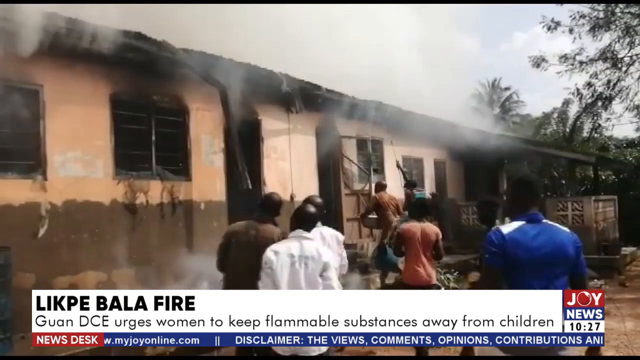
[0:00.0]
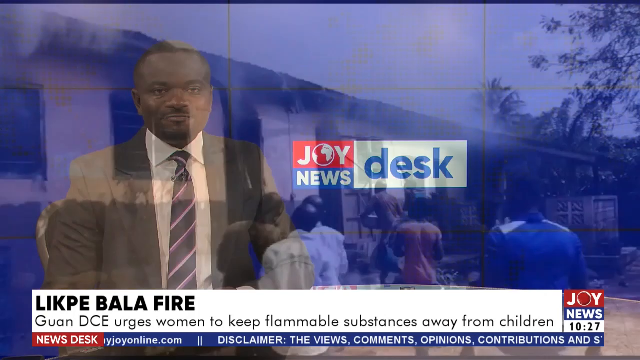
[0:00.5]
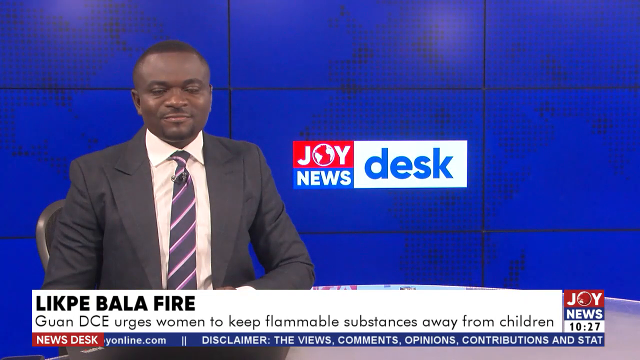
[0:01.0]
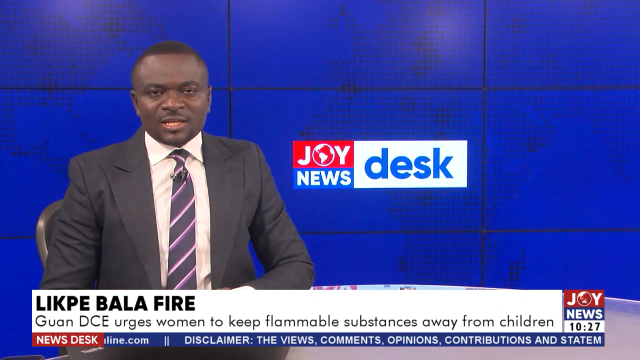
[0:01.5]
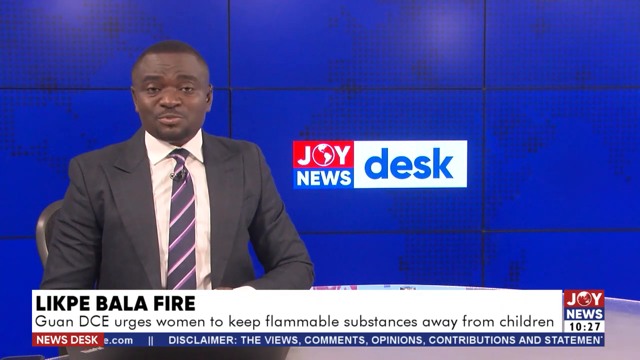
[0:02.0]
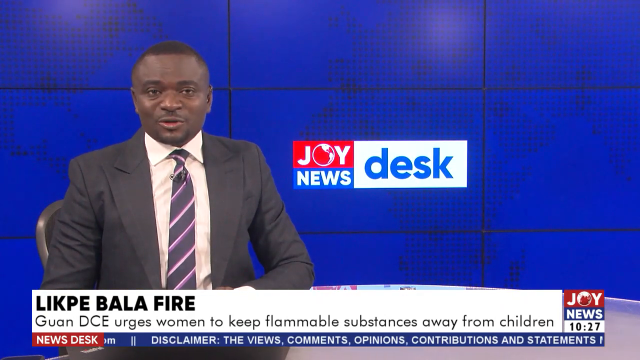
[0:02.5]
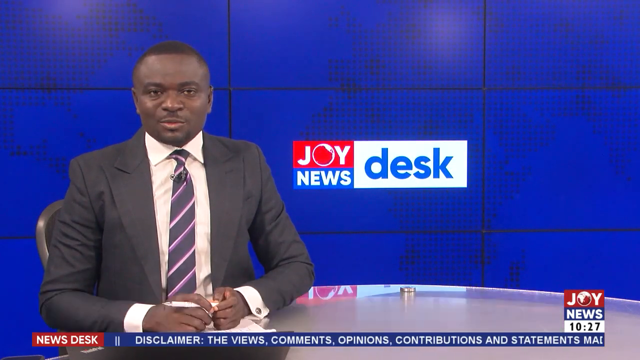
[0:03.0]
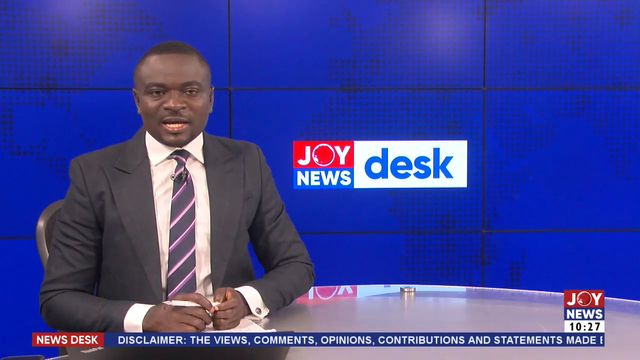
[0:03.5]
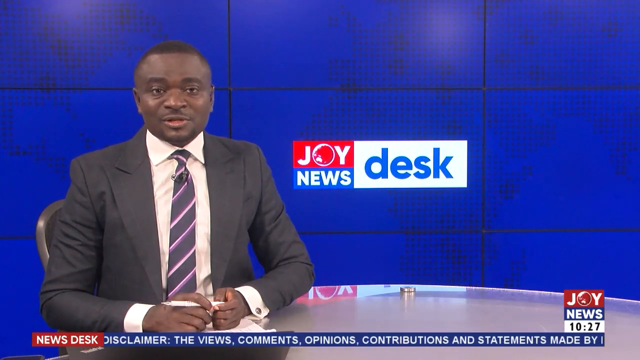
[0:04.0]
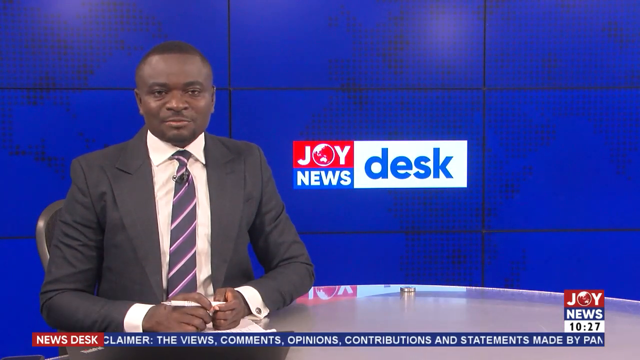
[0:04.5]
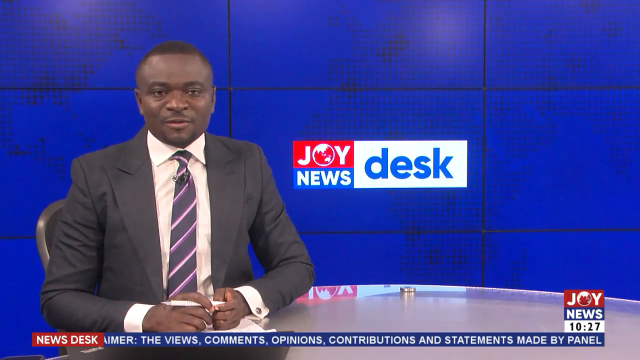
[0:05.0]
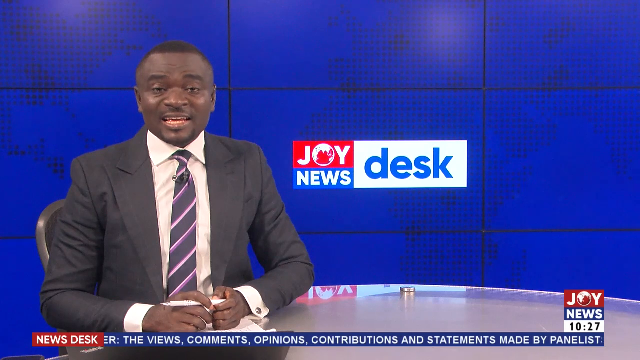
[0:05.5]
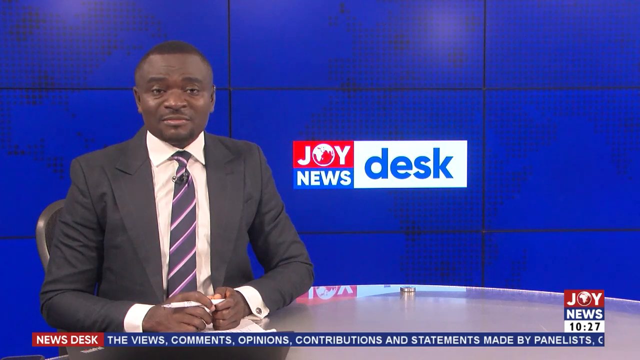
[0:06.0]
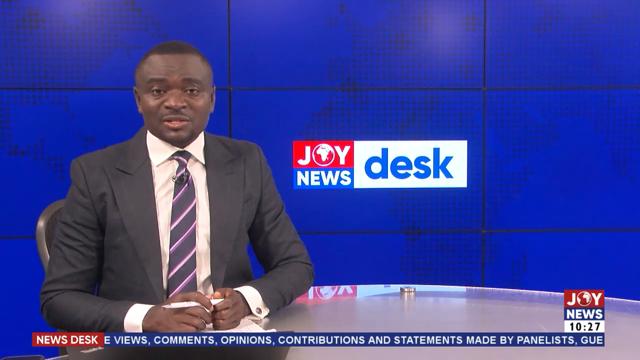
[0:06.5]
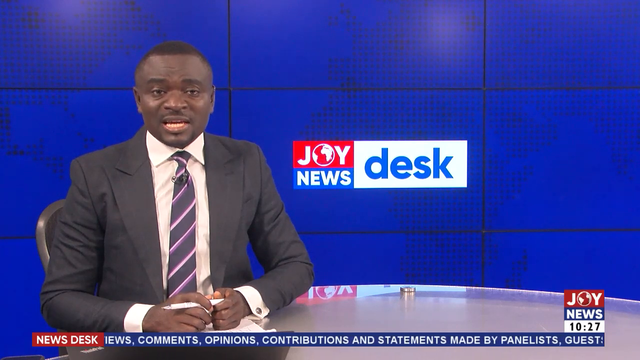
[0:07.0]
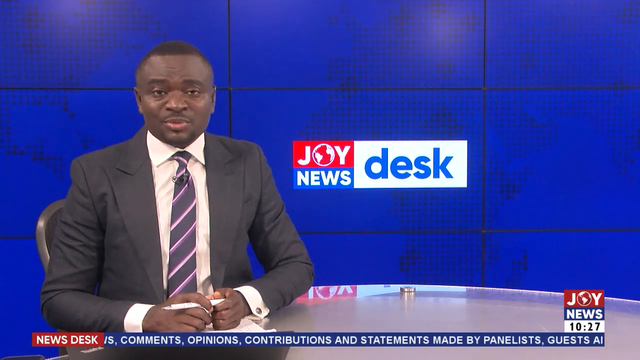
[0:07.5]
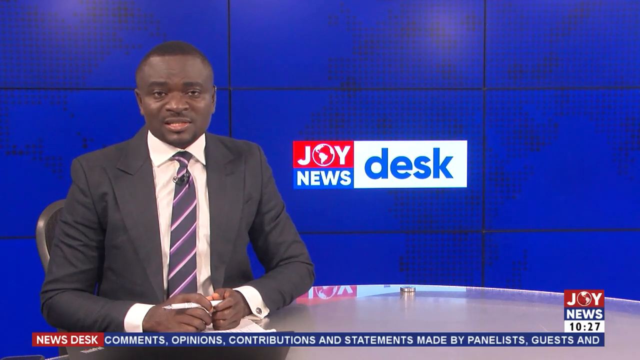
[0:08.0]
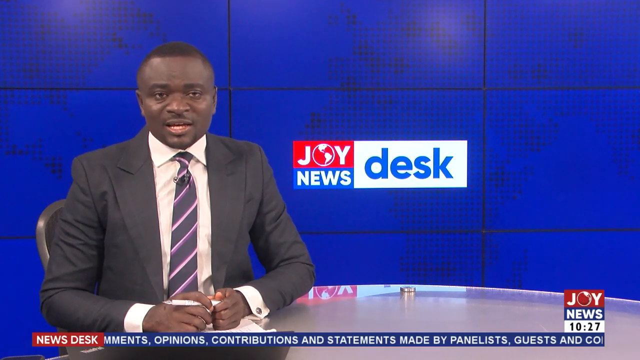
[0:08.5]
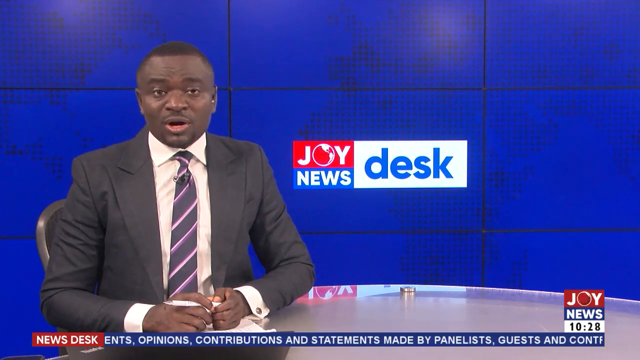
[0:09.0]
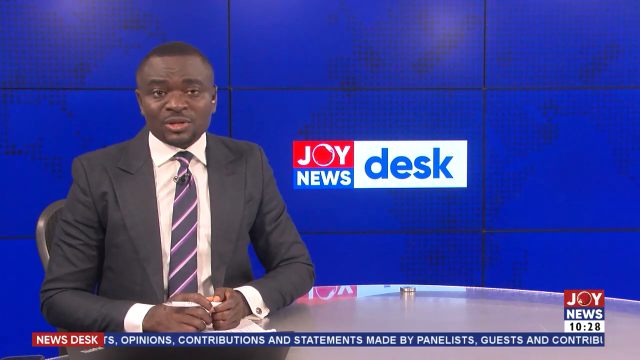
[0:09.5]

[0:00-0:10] The newscast opens on an image of what appears to be a burned-out building with smoke coming out of the windows, while a crowd has gathered to look at it. It then cuts to a newscaster against a blue screen, with "Joy News Desk" in the center of the screen. He looks to be an African man, possibly in South Africa. A headline ending "urges women to keep flammable substances away from children" is shown, and the broadcast time reads 10:27, suggesting this might be a story about a fire children started using flammable substances. The man wears a gray jacket, a striped tie and a white shirt under his jacket. He holds a pen, and his hands rest on some paper on the news desk.